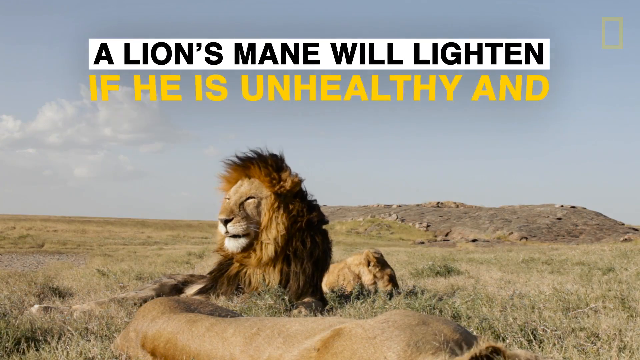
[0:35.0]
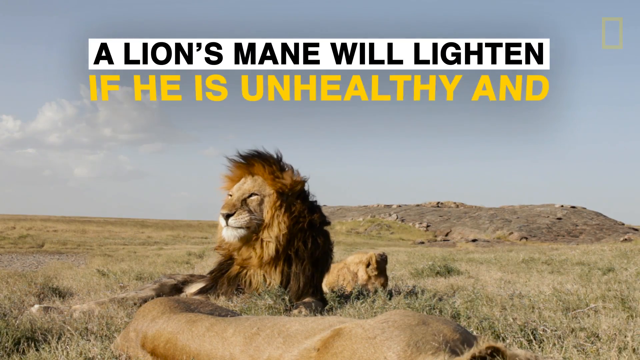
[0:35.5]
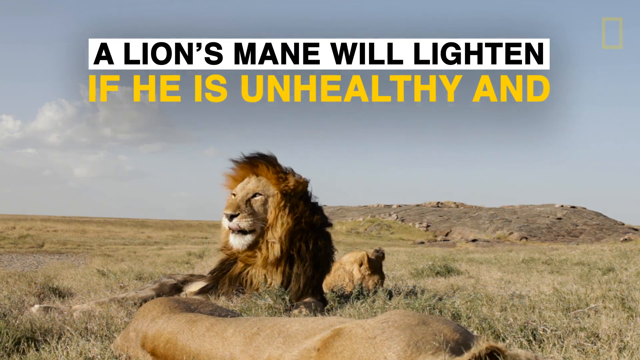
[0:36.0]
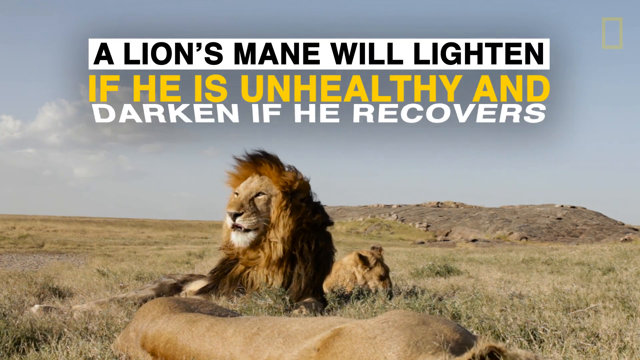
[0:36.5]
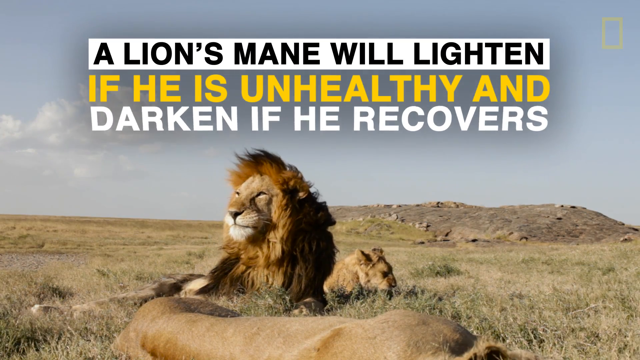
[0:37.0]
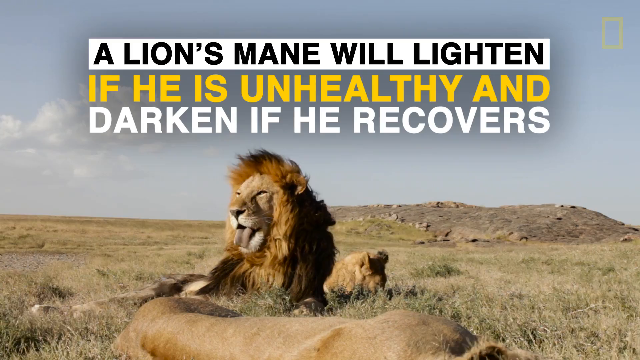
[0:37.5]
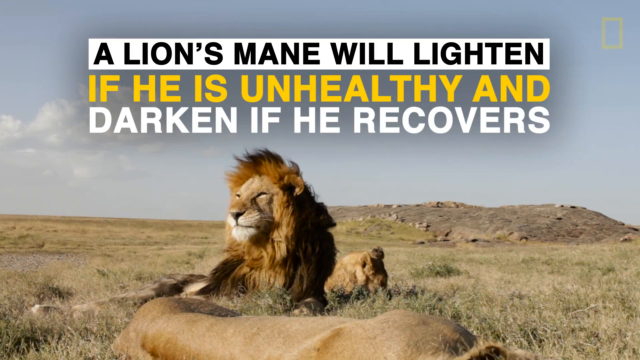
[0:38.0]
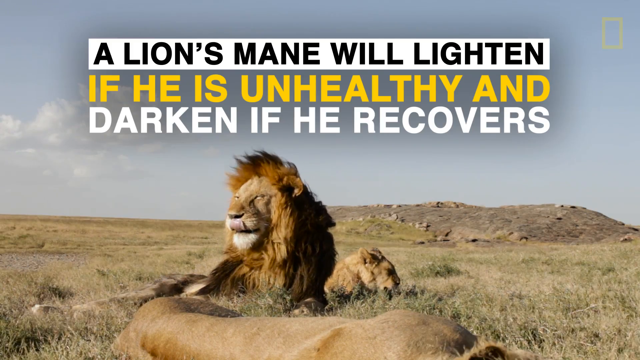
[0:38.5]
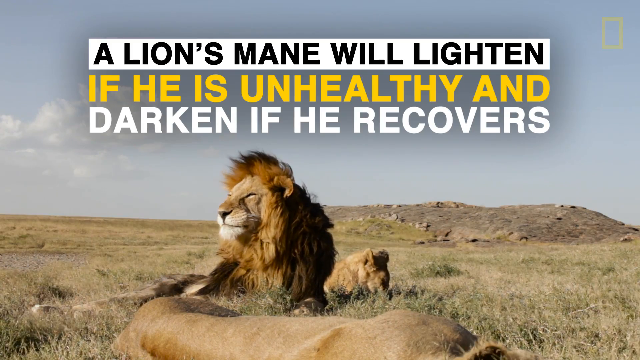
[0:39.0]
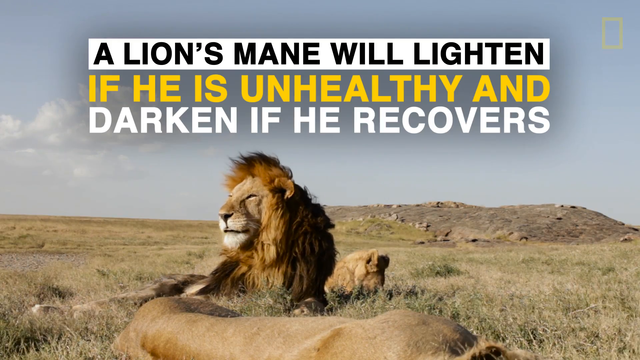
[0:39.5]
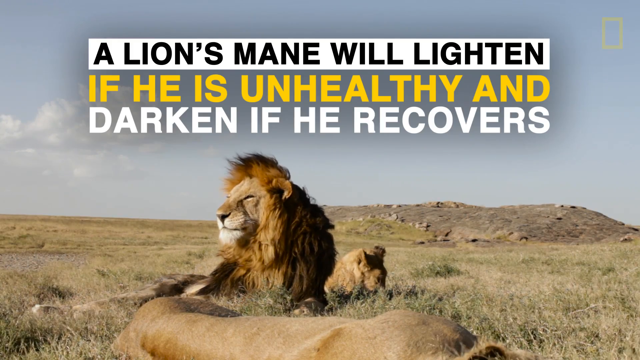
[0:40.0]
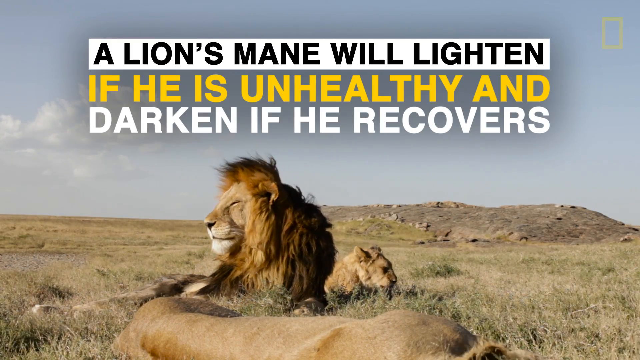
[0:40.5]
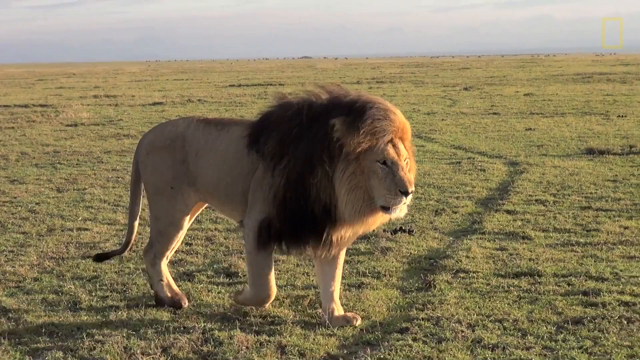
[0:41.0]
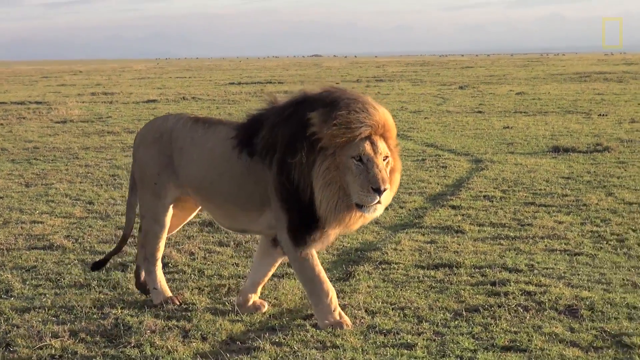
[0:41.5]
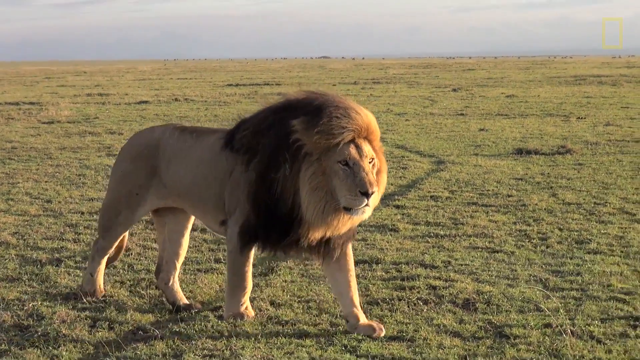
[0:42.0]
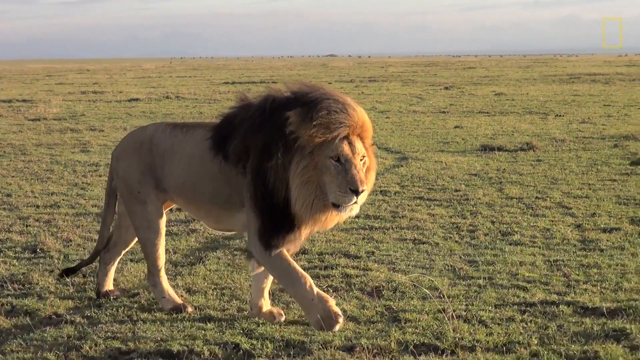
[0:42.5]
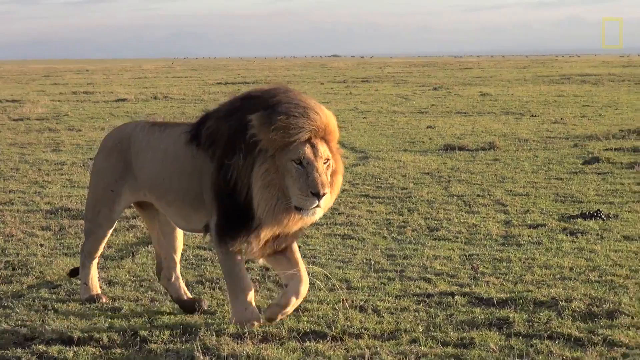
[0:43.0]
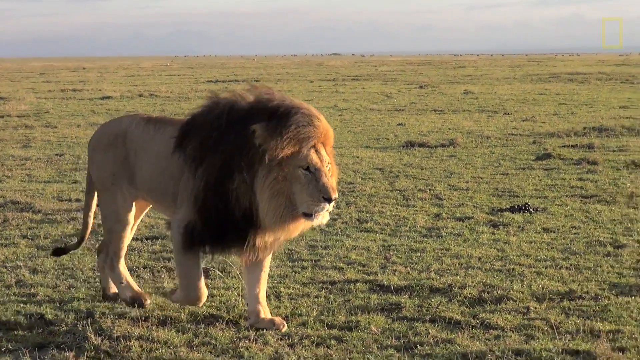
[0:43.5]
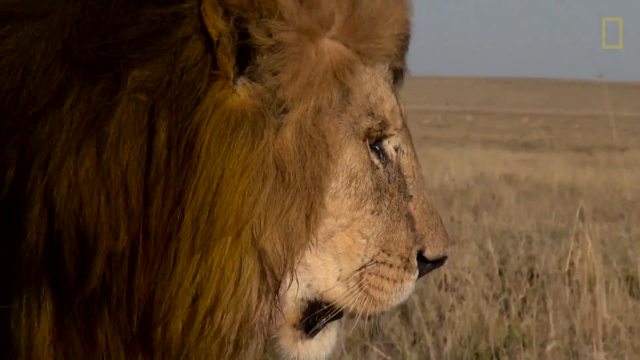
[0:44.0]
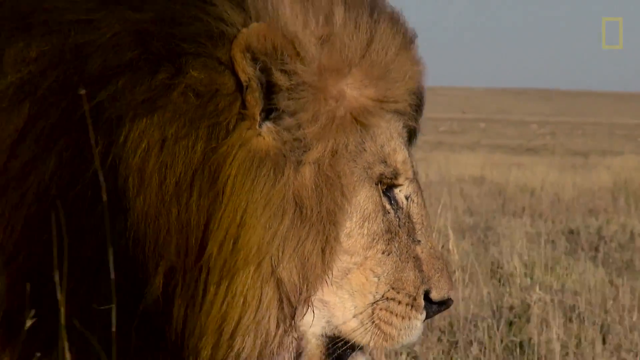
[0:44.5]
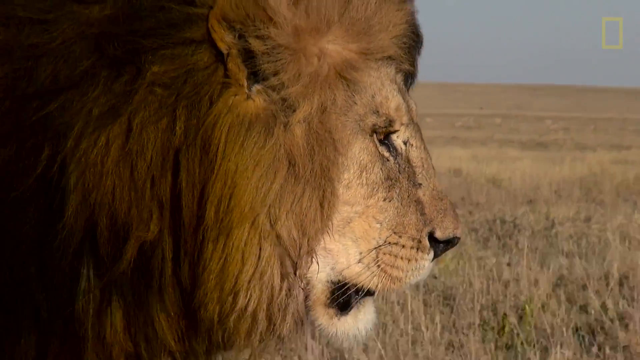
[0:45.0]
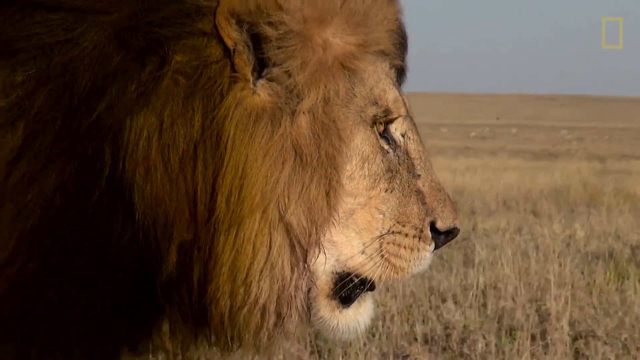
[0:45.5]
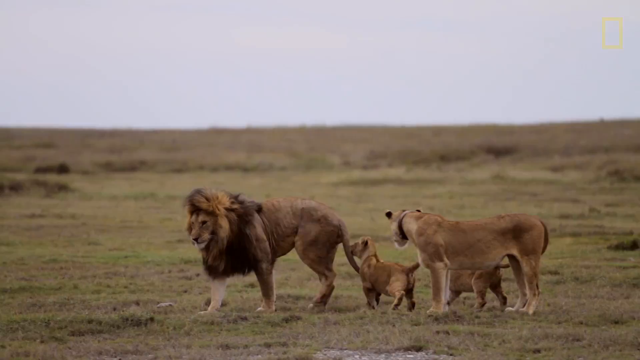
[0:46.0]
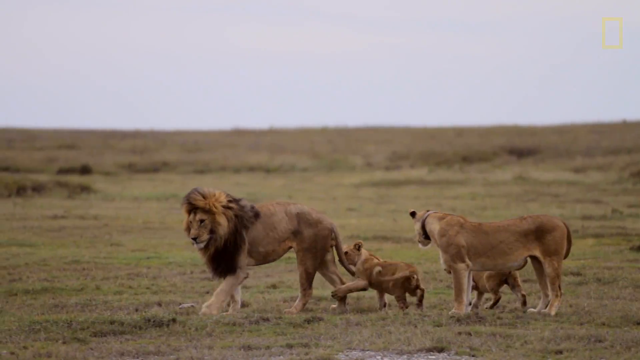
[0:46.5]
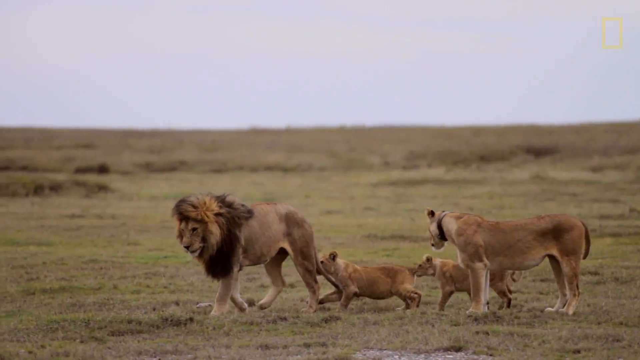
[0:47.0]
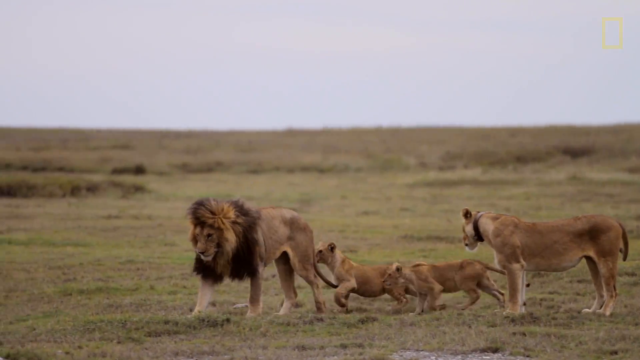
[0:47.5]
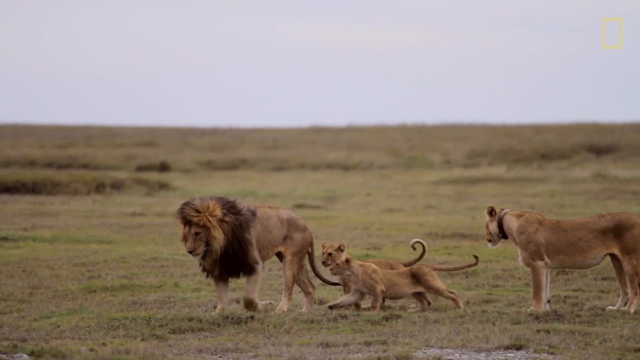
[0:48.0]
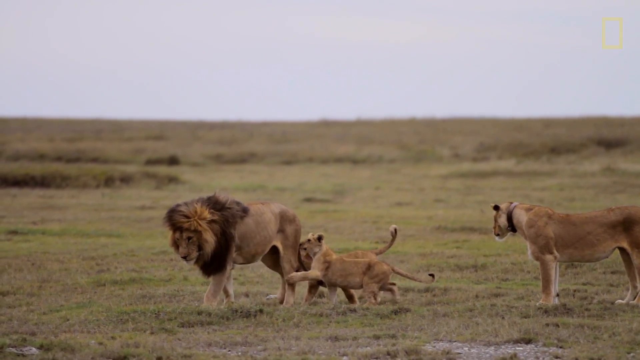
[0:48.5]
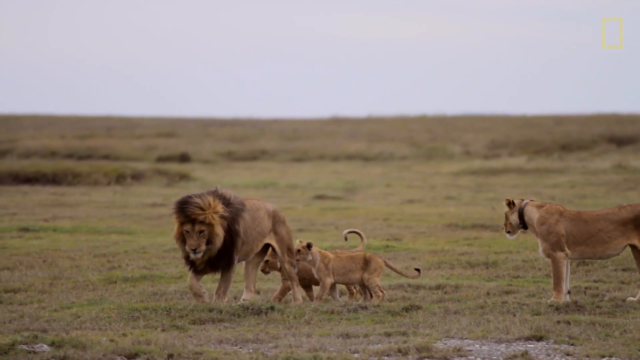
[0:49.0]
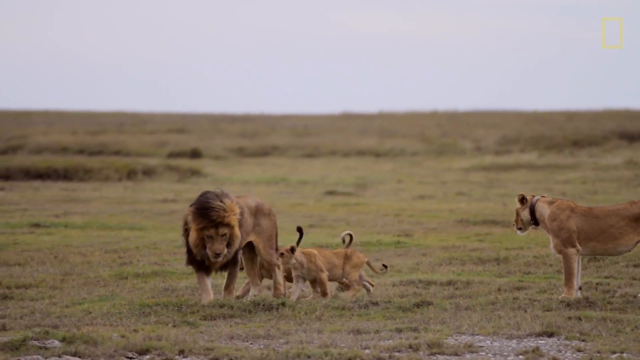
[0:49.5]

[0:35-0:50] Text on the screen reads "A lion's mane will lighten if he is unhealthy and darken if he recovers." Underneath, a male lion lays in the grass with his head up, yawning and squinting as if looking toward the sun. Behind him a female lies in the grass, appearing to clean her paws; she is licking, but the height of the grass makes it hard to tell exactly what. Next comes a picture of a solitary male lion walking through the savannah; the view zooms in on his face, then zooms out to show him, a lioness, and two lion cubs walking.